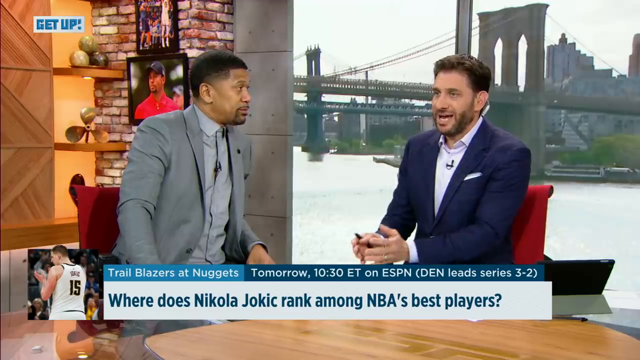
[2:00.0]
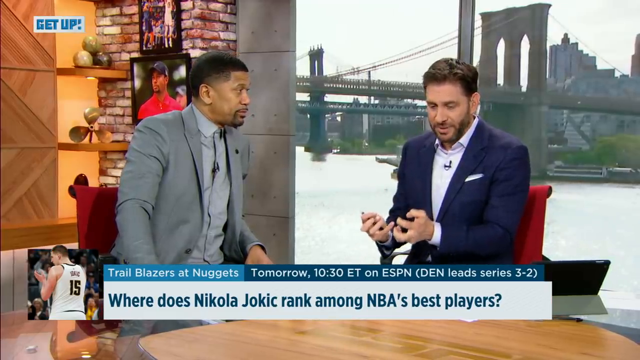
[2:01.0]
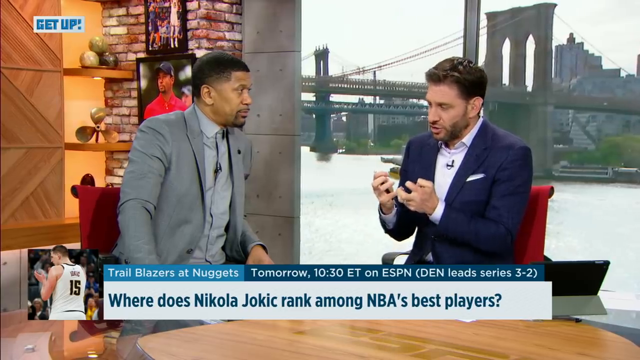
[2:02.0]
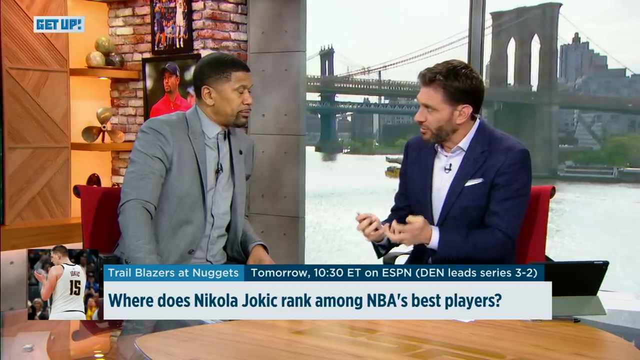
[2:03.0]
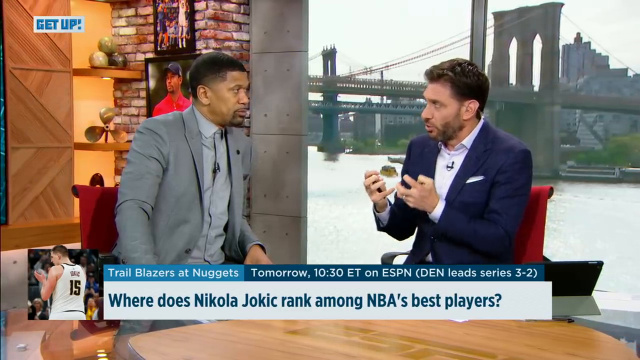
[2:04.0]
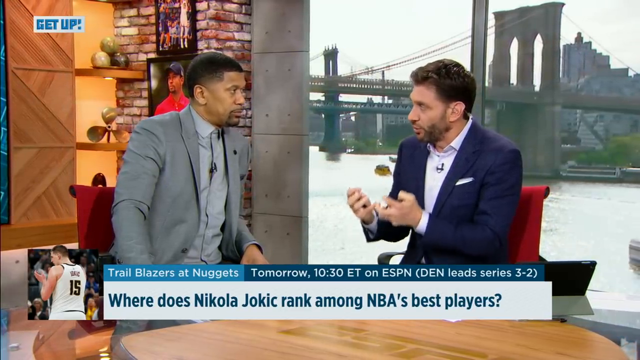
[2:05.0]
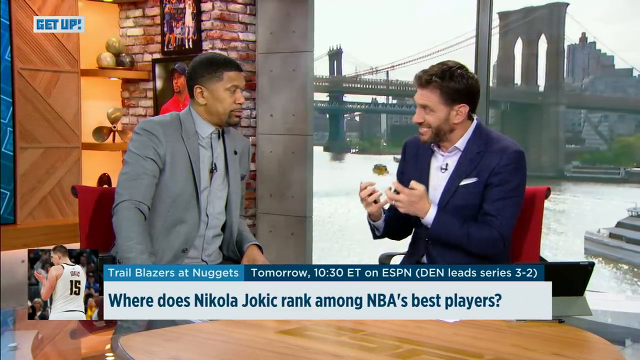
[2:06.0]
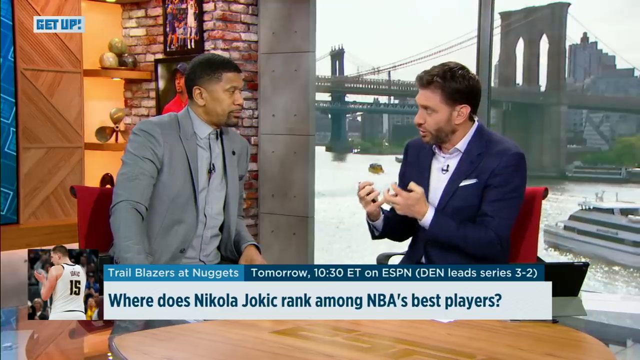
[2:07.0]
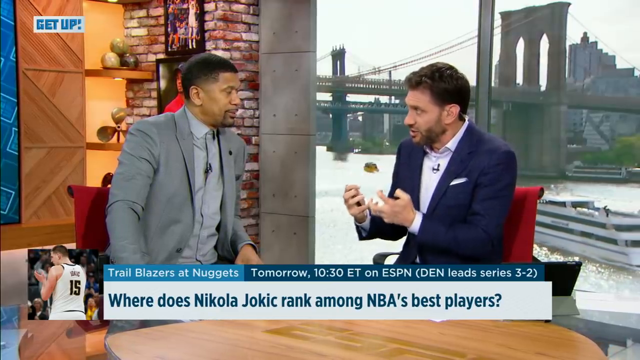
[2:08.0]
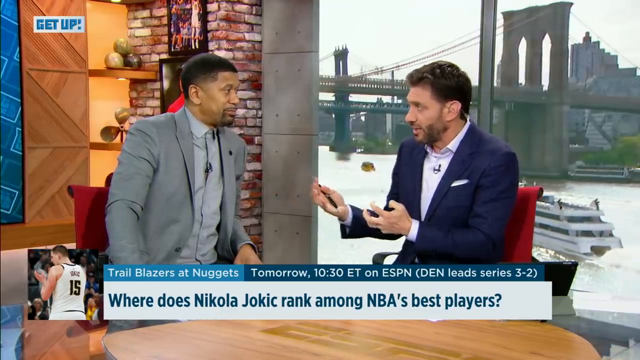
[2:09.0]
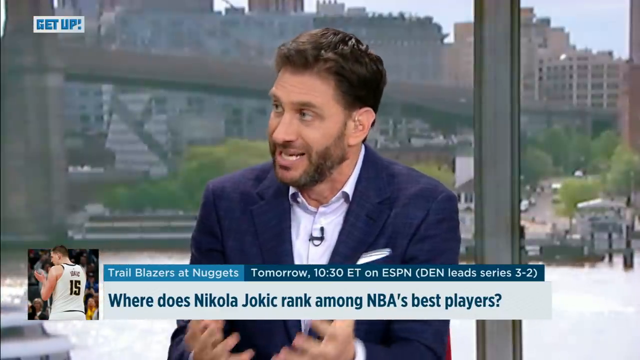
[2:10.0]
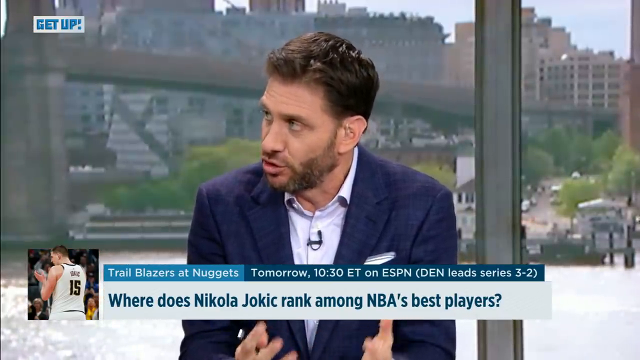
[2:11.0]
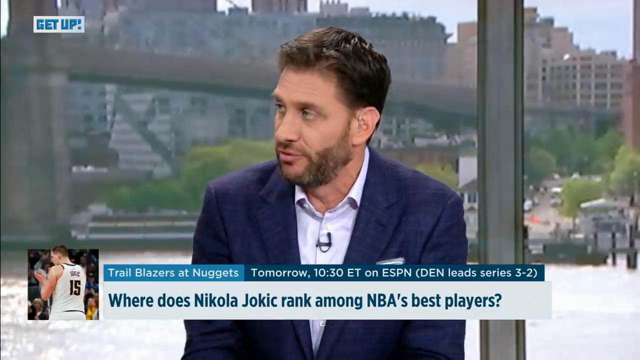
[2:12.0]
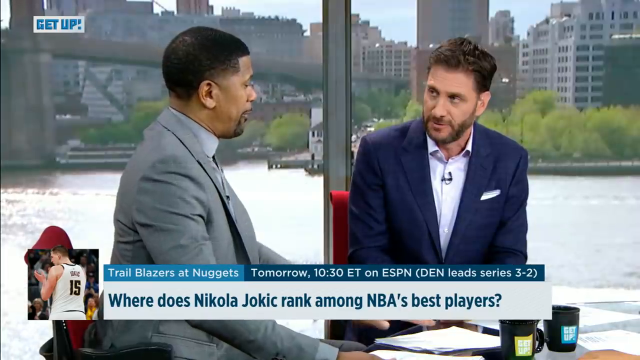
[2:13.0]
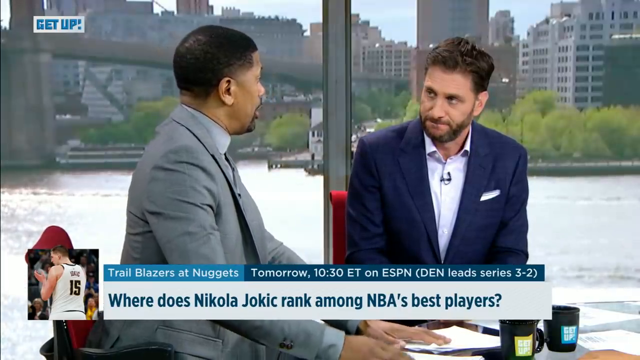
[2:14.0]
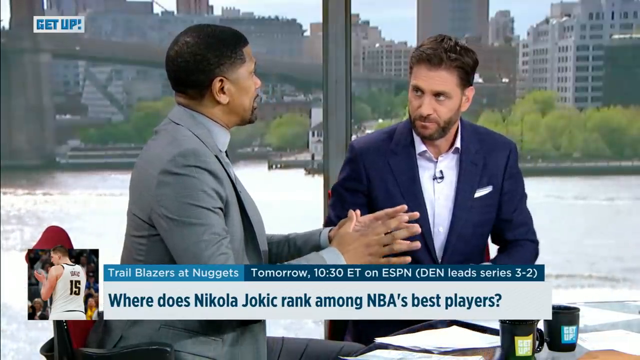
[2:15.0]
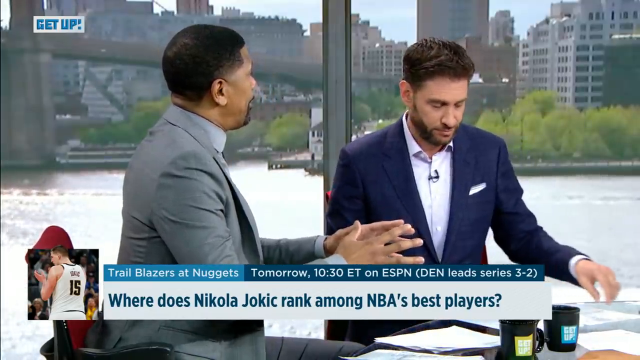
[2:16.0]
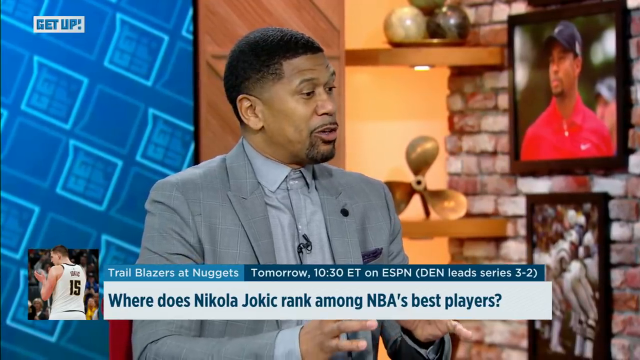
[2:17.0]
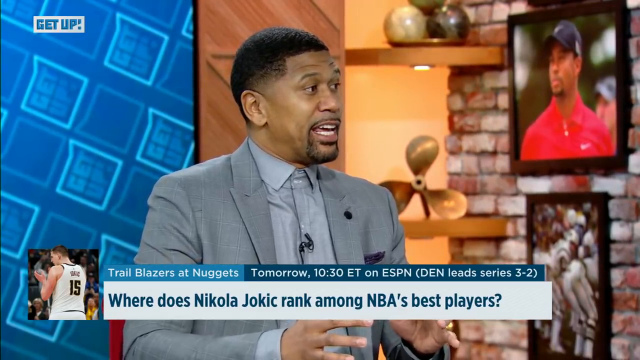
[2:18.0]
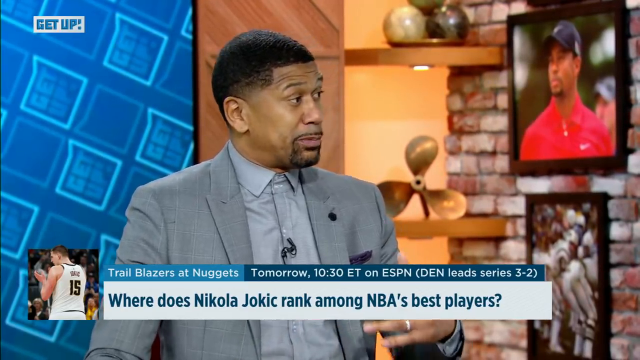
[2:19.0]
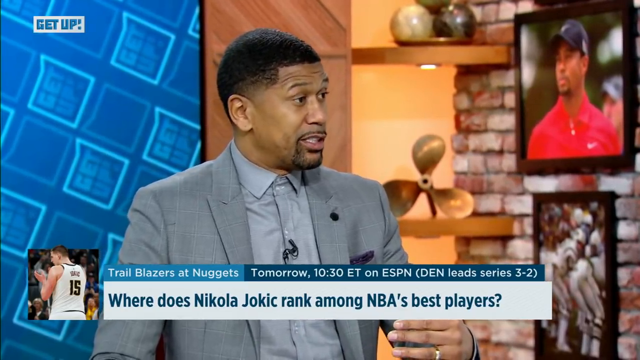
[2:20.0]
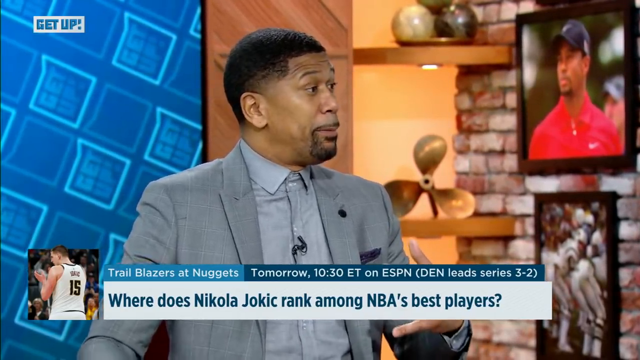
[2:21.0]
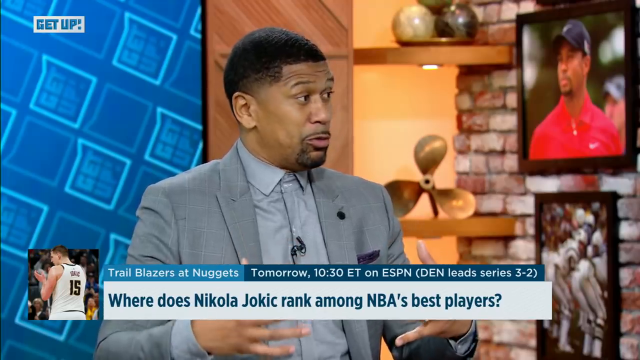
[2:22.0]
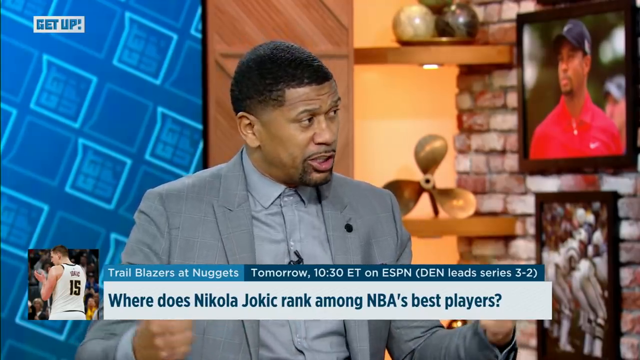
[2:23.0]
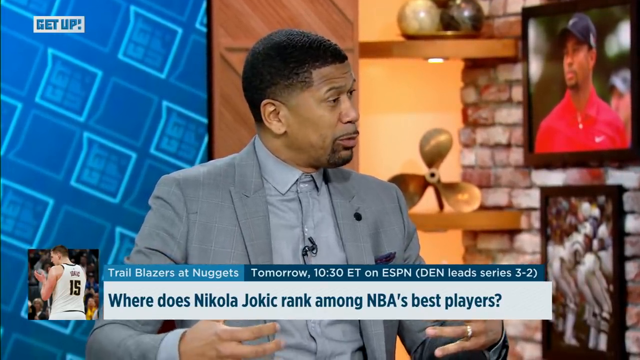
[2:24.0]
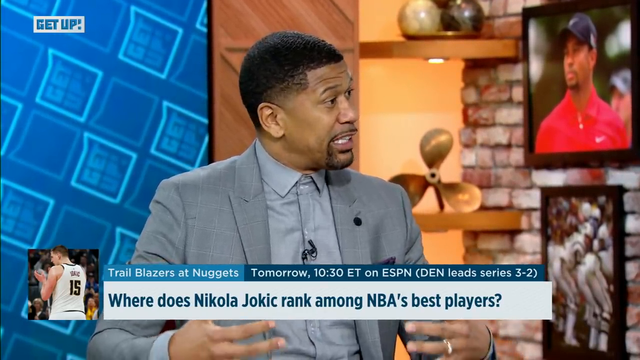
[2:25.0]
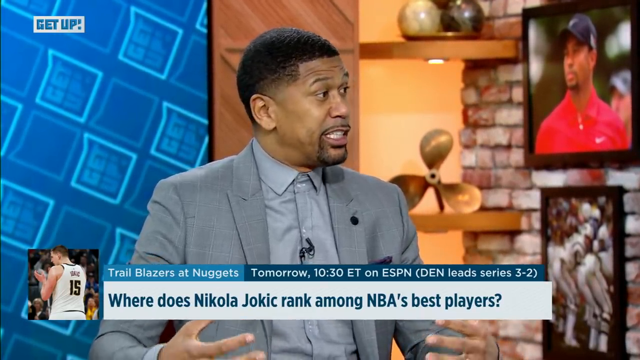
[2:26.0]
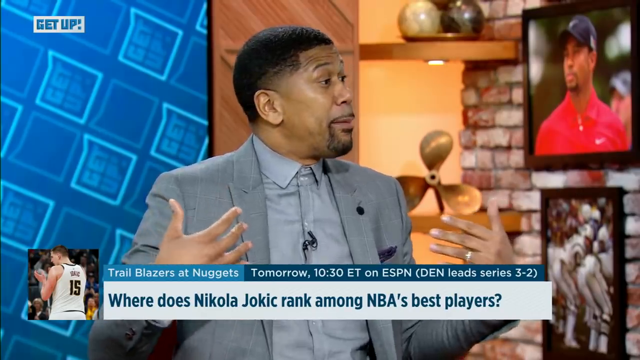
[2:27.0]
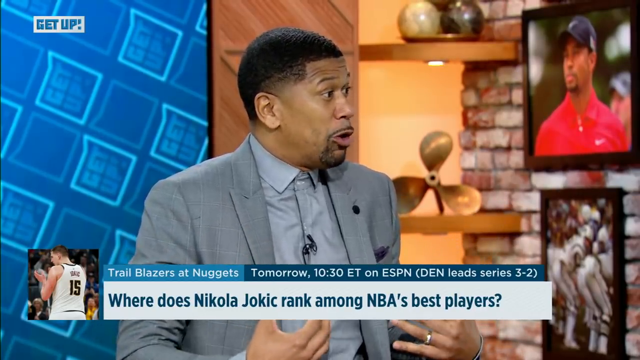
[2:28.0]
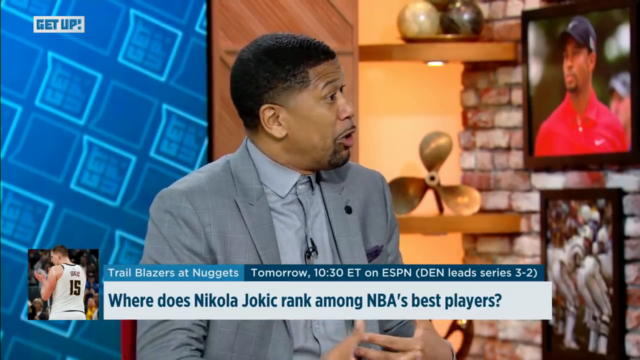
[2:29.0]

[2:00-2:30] In the top left of the screen is a logo on a small white inset with the words "get up!" in blue text. At the bottom of the screen the information bar with the question about Nikola Jokic remains, and on its left side is another inset showing the back of a player's white shirt with black trim, apparently reading "Jokic" and "15". The two men turn slightly to face each other. The man in the blue jacket uses his hands as he speaks, holding them palms upward with fingers curled like claws and moving them up and down. He then holds out his right arm toward his colleague, and the screen shows him alone before returning to the pair and then to the man in the gray jacket and shirt.